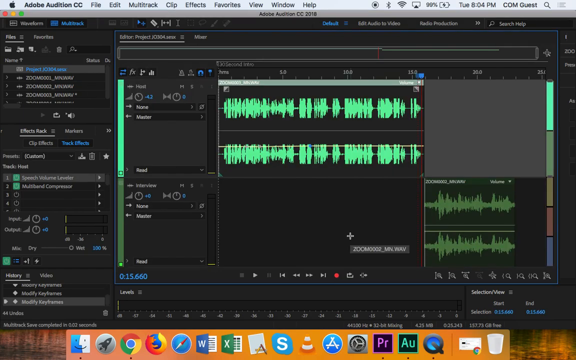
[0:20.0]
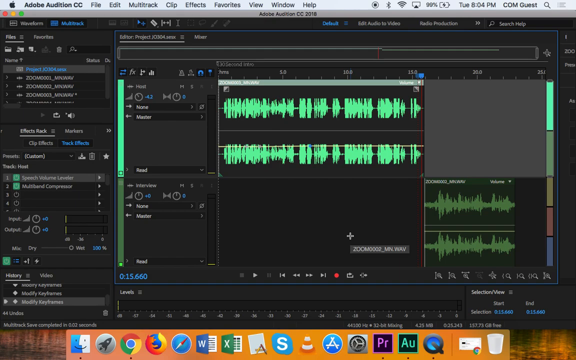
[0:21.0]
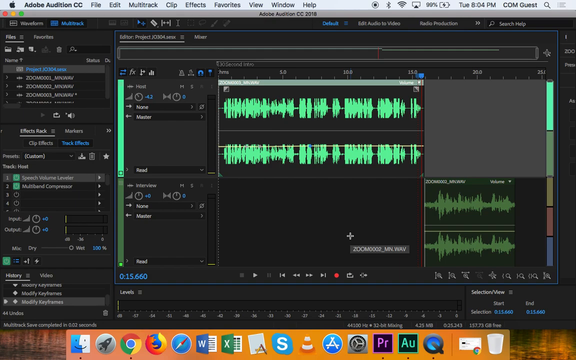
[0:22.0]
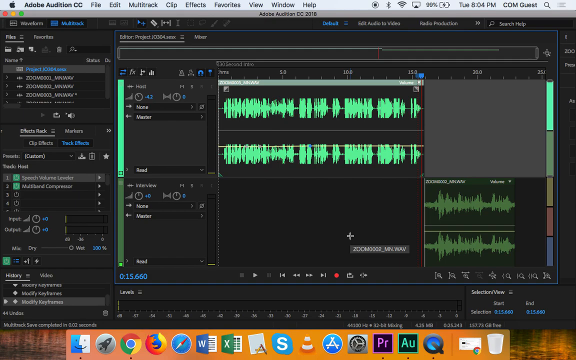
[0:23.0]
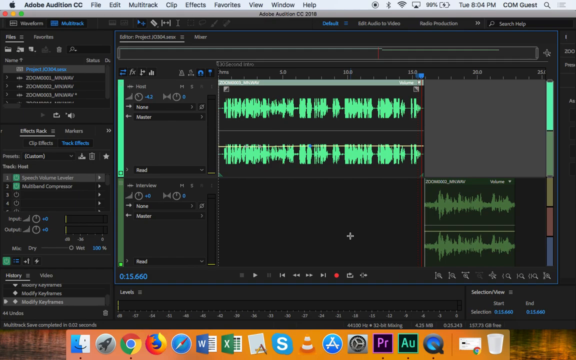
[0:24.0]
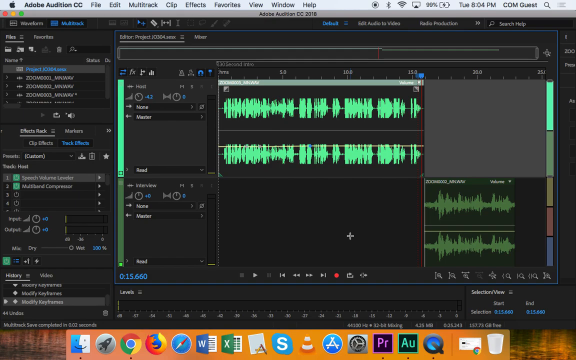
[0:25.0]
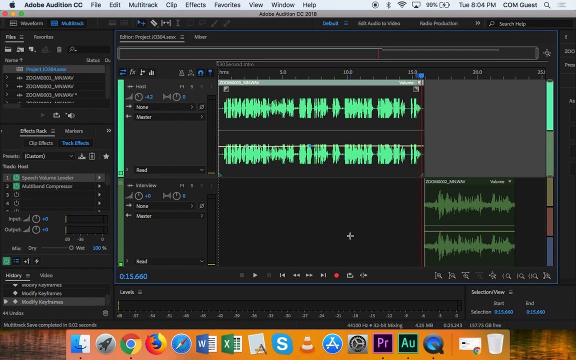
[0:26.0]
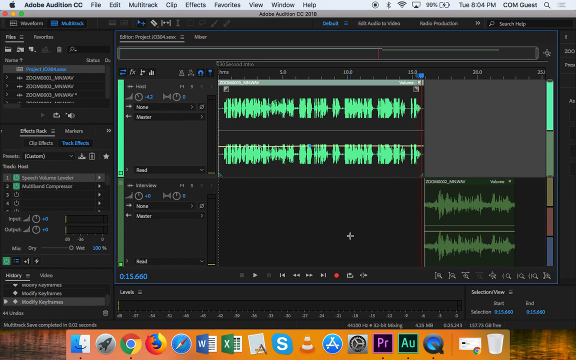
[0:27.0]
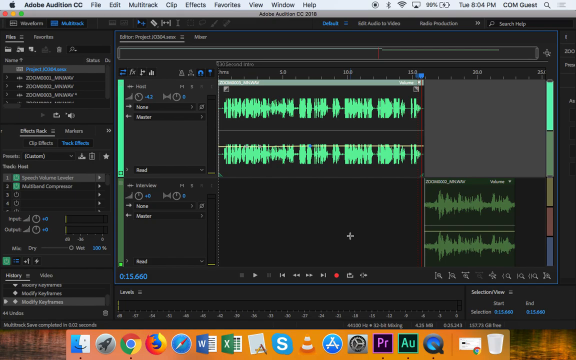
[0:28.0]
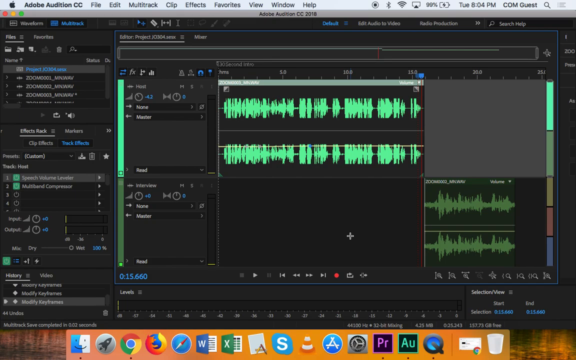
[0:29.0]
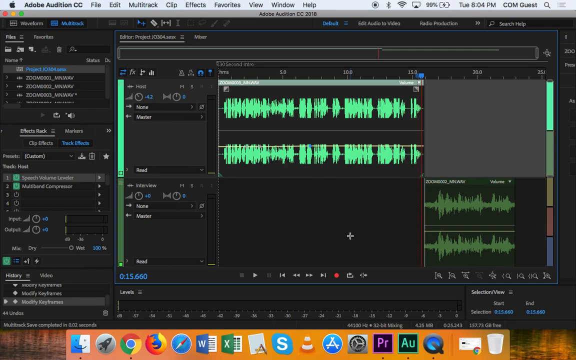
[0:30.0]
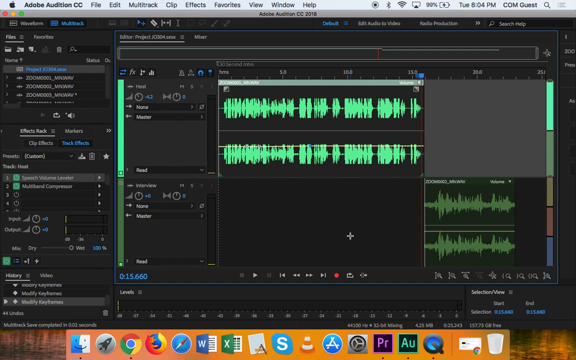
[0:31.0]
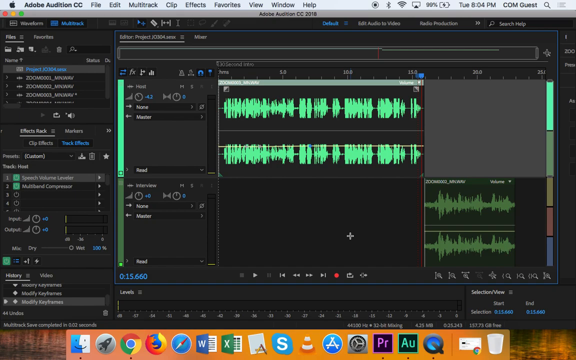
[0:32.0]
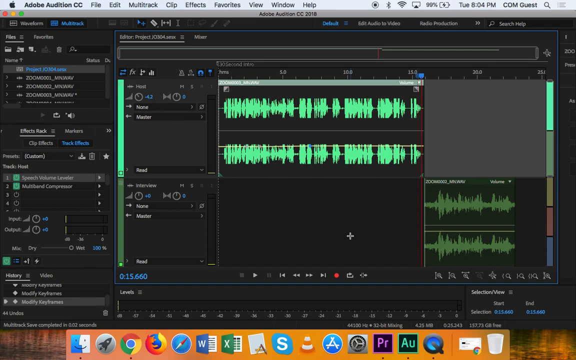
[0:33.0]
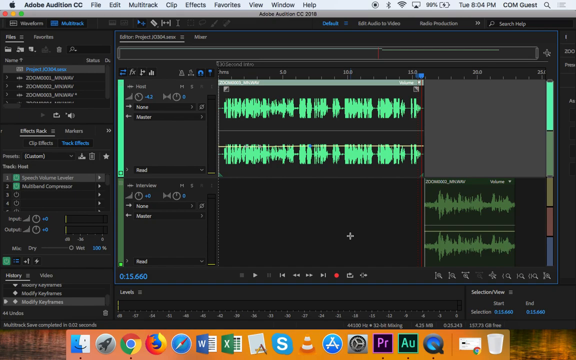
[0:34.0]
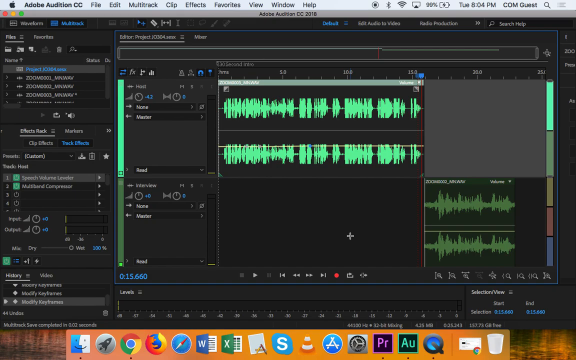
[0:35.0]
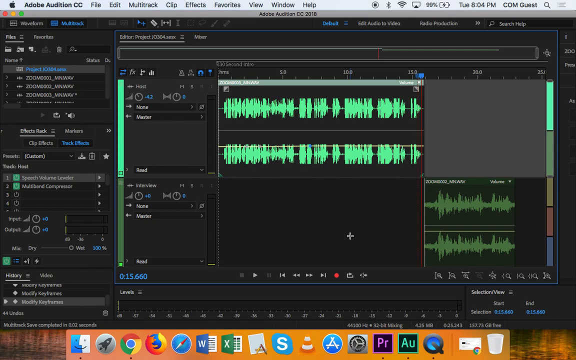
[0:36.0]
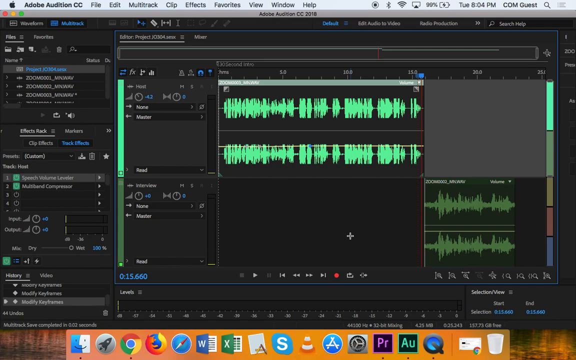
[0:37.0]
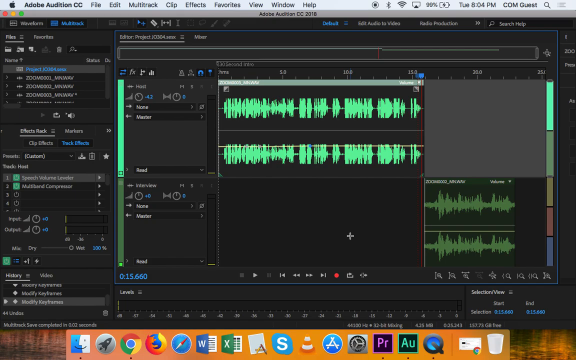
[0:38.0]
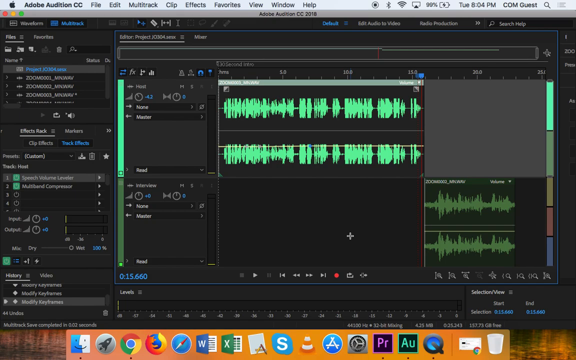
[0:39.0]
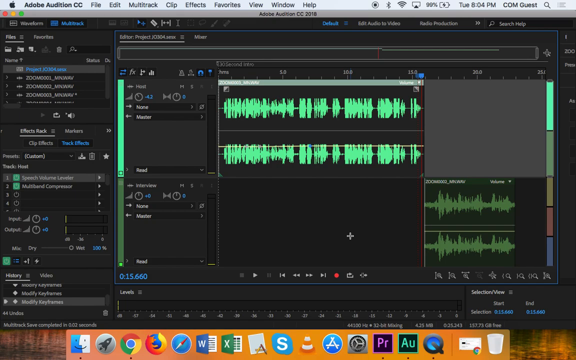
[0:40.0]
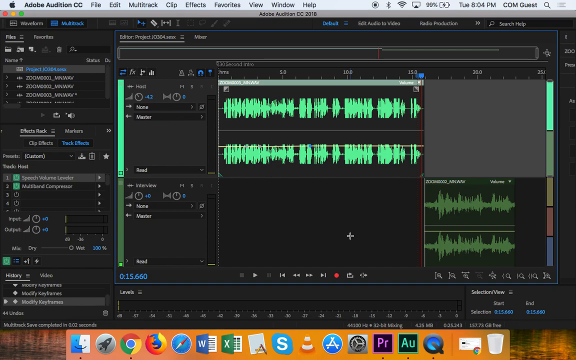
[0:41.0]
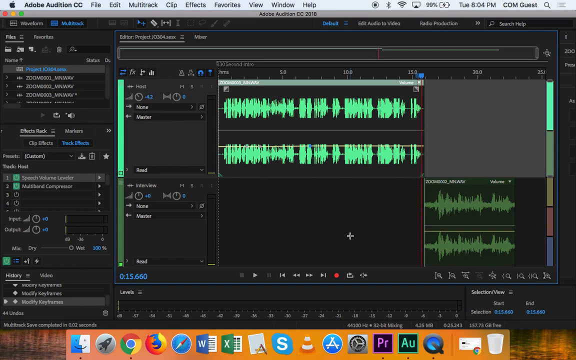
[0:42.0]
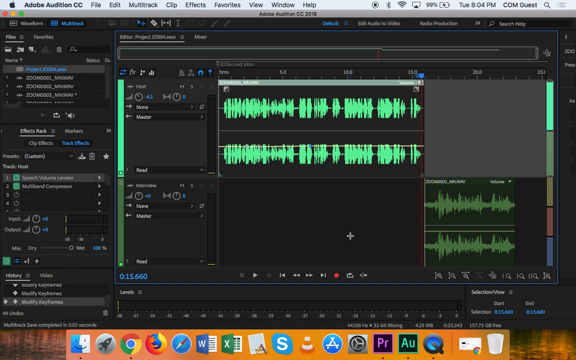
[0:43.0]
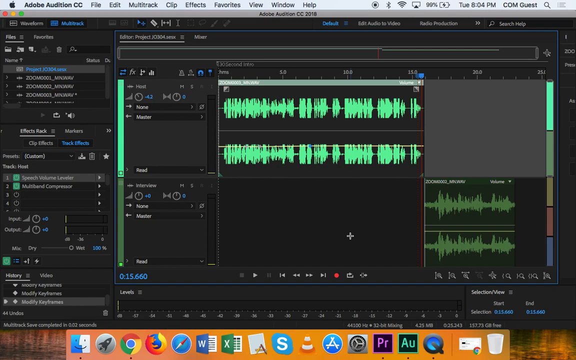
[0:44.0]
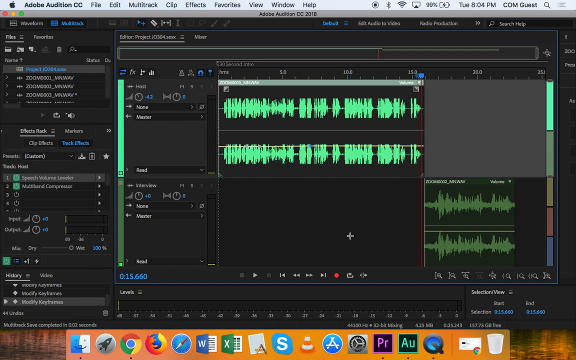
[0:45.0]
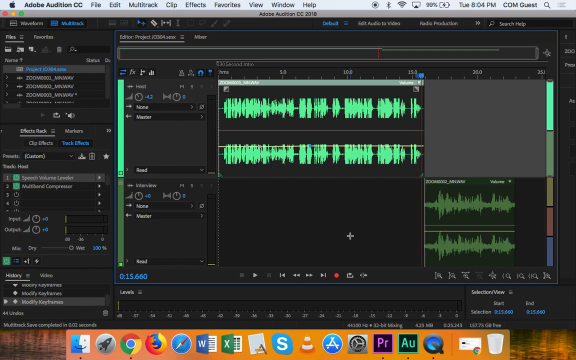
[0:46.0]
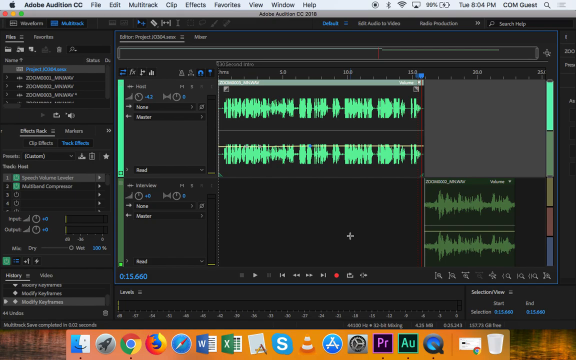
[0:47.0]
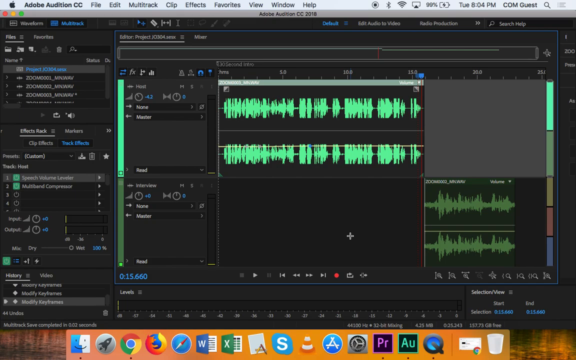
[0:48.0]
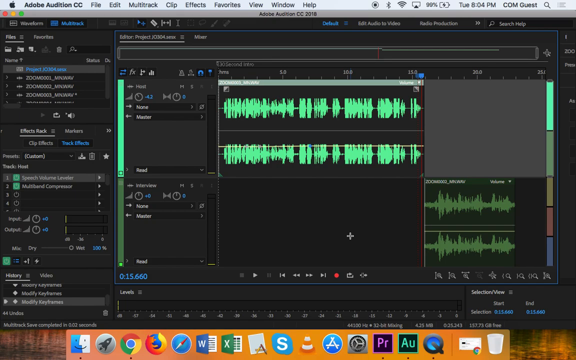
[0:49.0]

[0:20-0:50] Someone is recording their screen while using a program named Adobe Audition CC, either editing various sound files or music together to form a larger song. The screen is largely black, with the editing program in focus. The Mac interface along the very top shows various menu options, and various apps are at the bottom of the screen. On the left side of the program's workspace are various mixers and lists of sounds applied to the workspace. The workspace with the project is on the right, showing various green sound waves placed into it, each with its own mixer and volume control options. The screen stays unchanged for some time; the user does nothing and does not move the mouse, which appears as a crosshair on the workspace in the center of the screen.